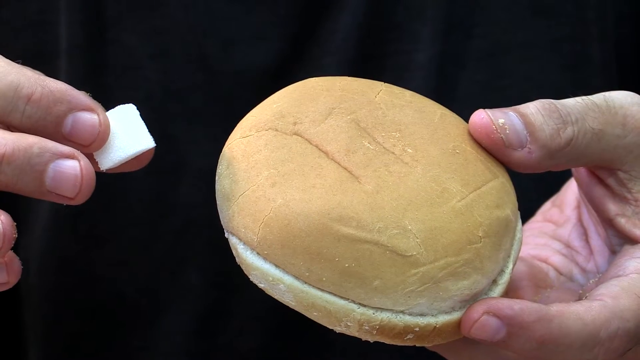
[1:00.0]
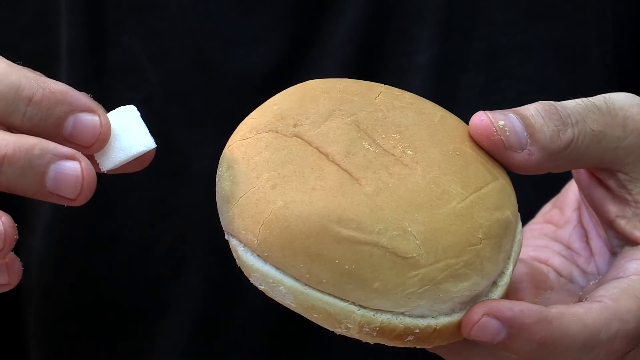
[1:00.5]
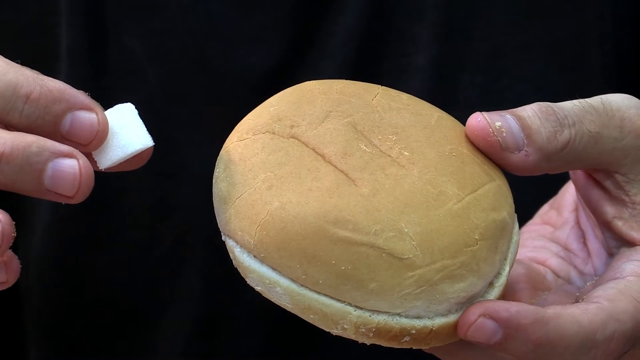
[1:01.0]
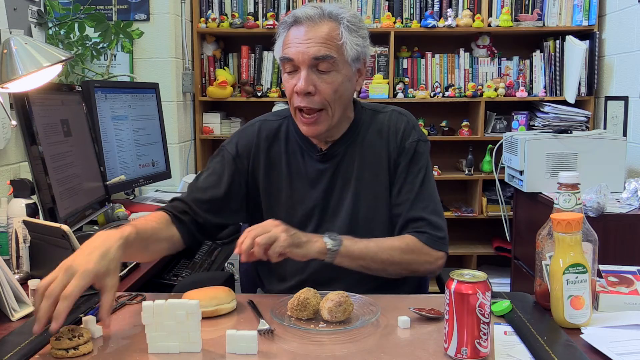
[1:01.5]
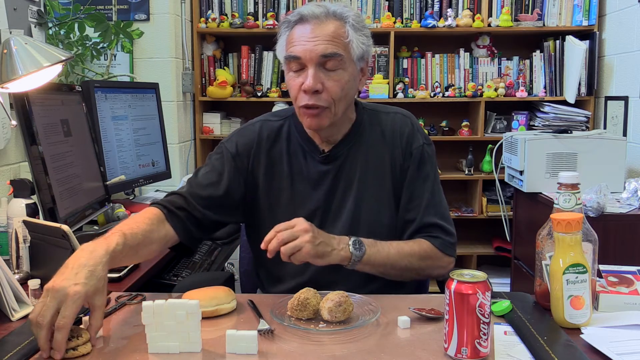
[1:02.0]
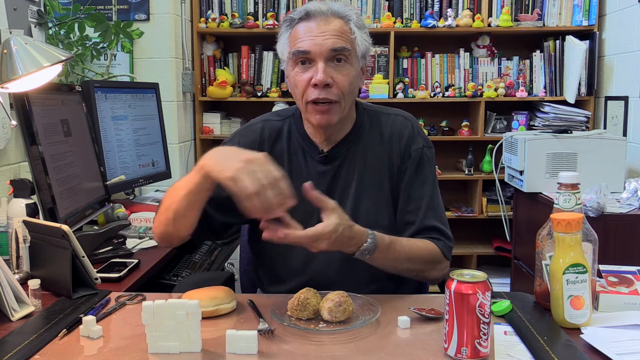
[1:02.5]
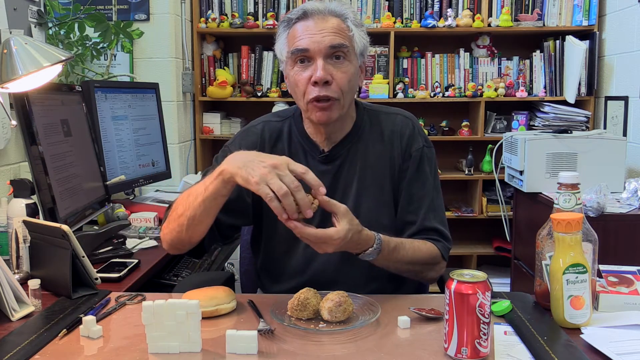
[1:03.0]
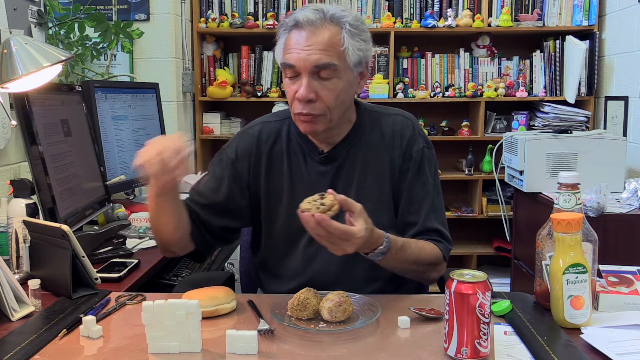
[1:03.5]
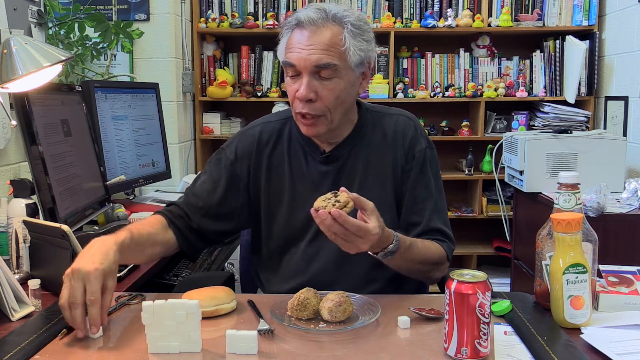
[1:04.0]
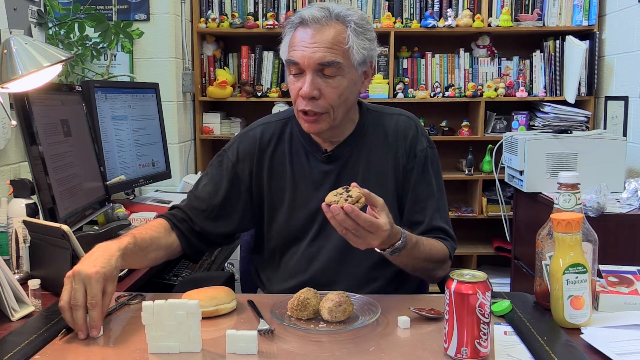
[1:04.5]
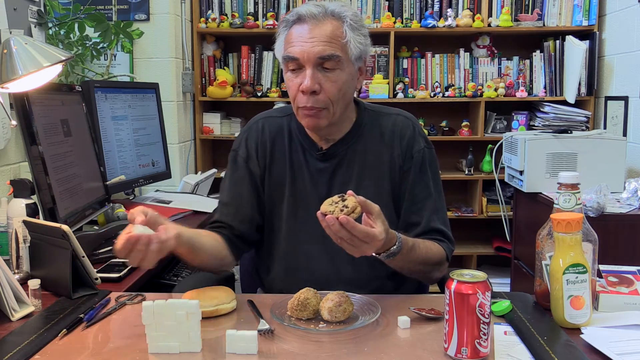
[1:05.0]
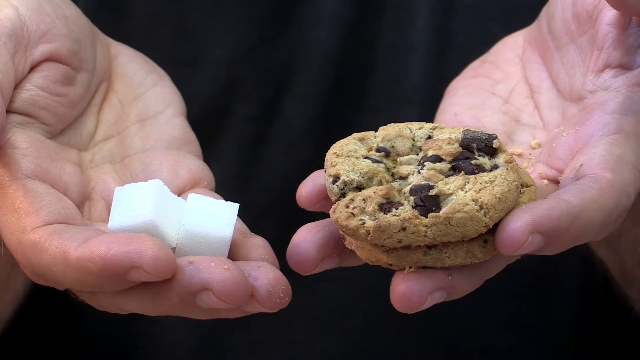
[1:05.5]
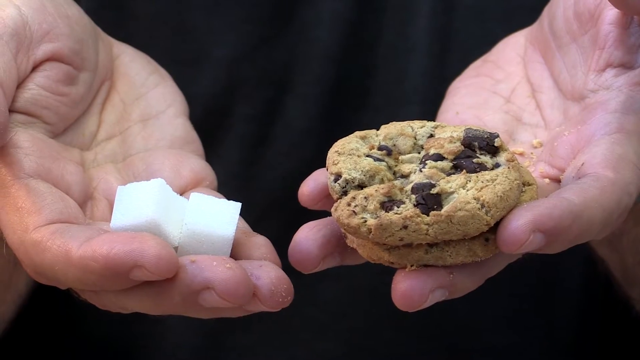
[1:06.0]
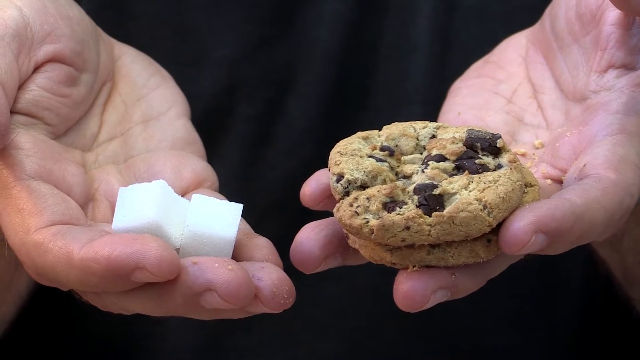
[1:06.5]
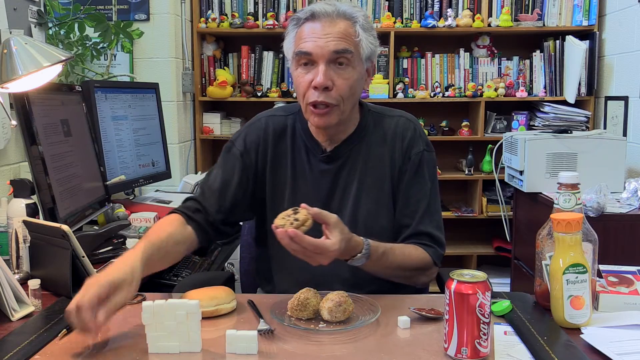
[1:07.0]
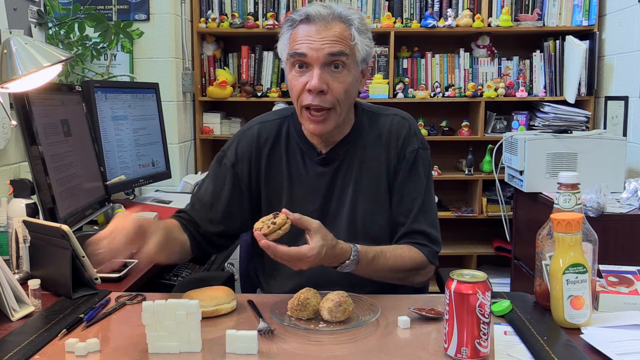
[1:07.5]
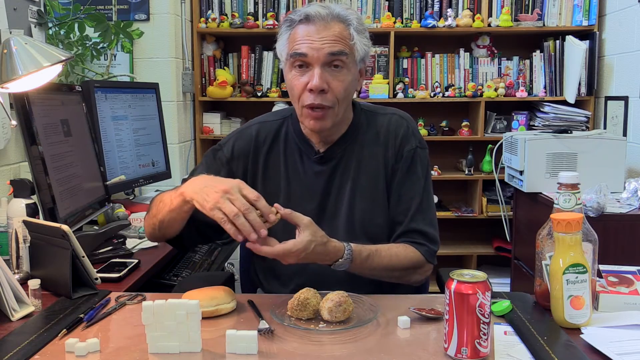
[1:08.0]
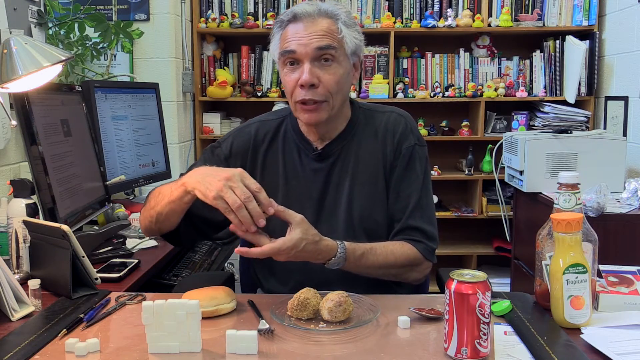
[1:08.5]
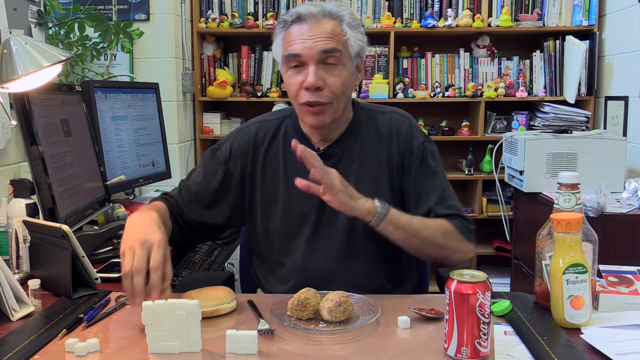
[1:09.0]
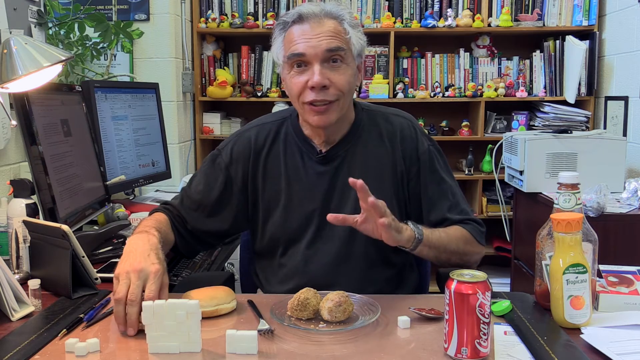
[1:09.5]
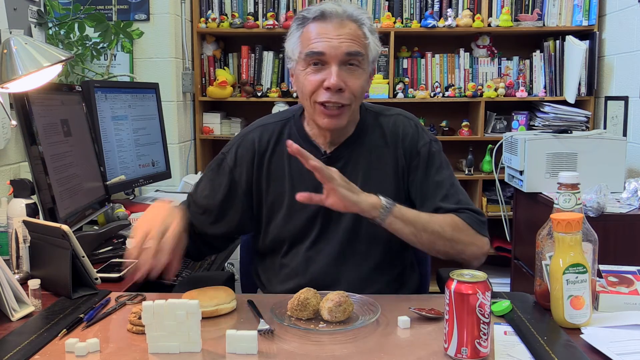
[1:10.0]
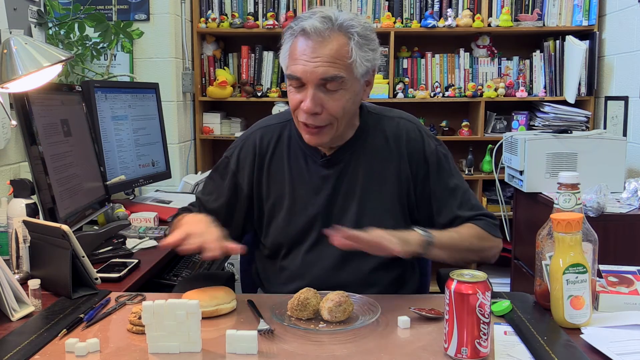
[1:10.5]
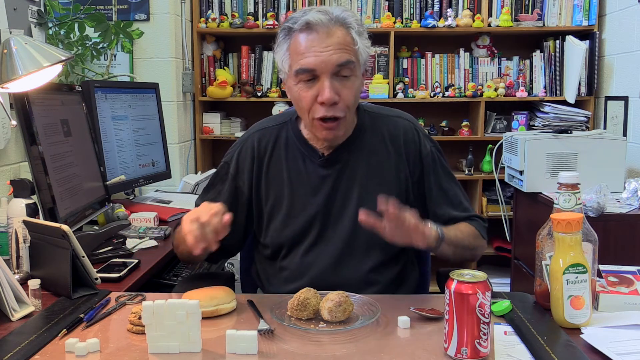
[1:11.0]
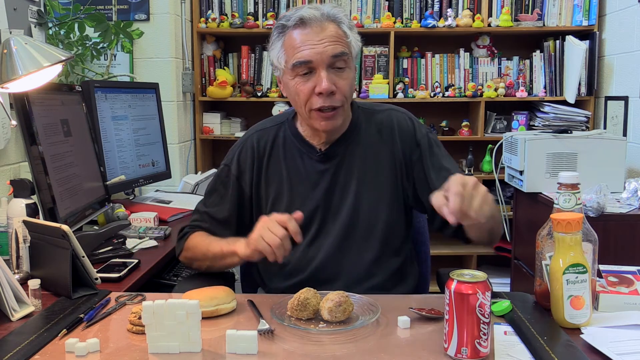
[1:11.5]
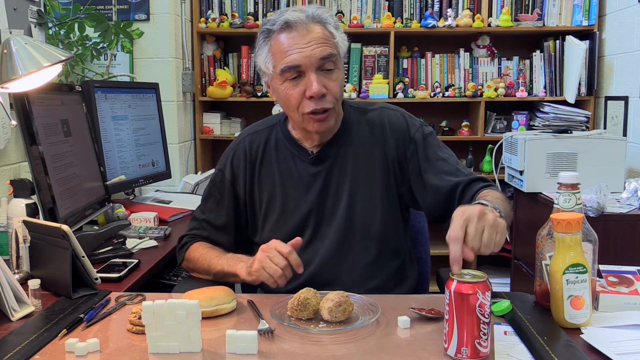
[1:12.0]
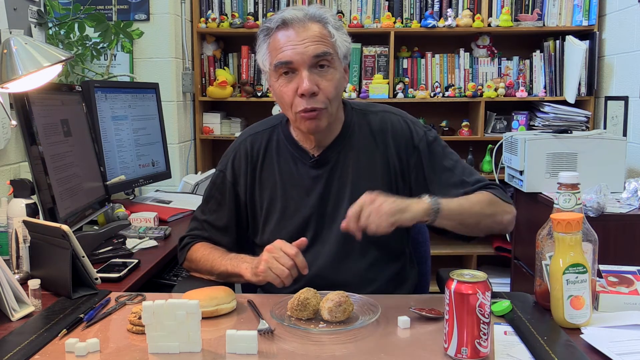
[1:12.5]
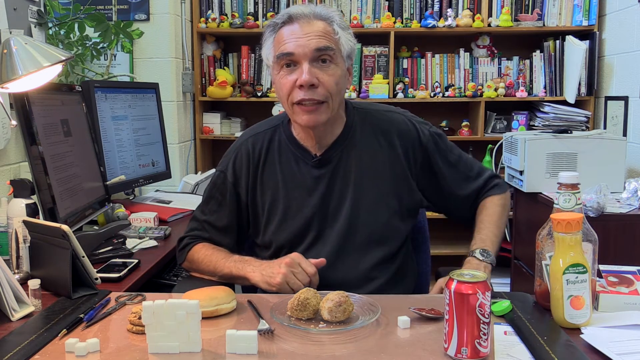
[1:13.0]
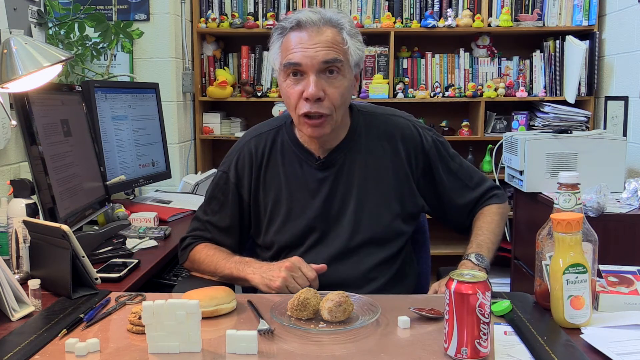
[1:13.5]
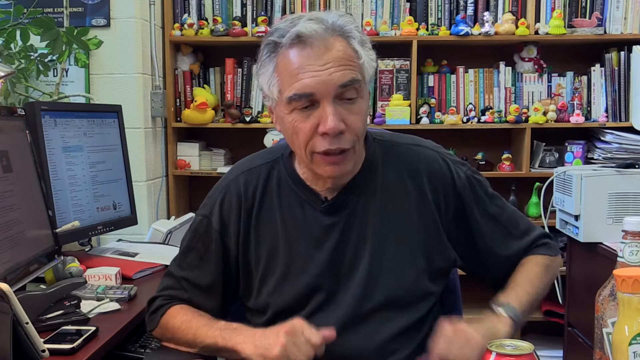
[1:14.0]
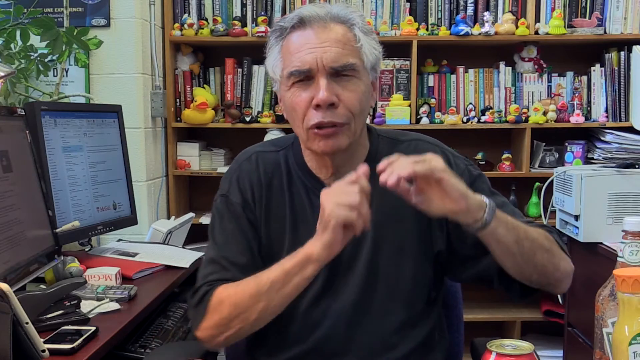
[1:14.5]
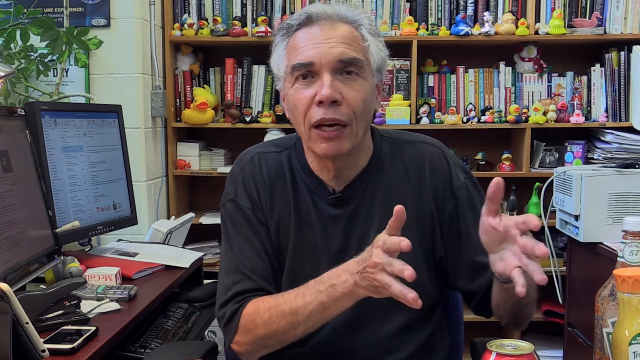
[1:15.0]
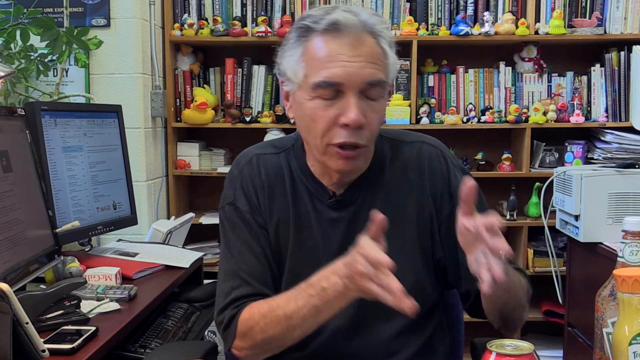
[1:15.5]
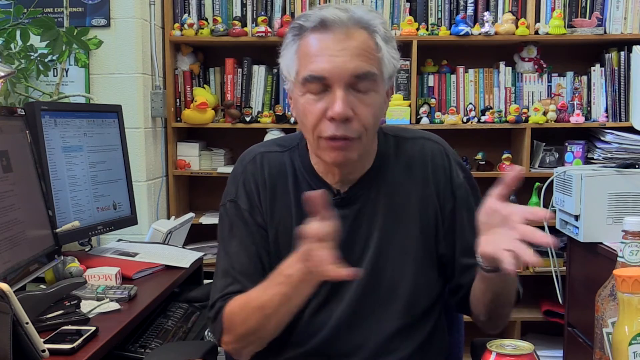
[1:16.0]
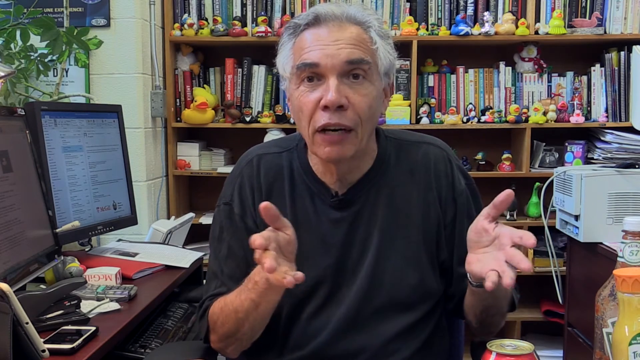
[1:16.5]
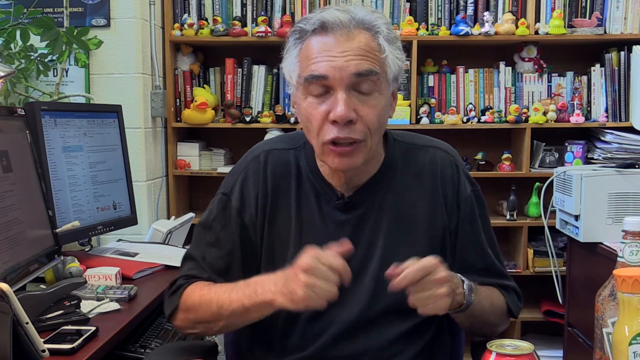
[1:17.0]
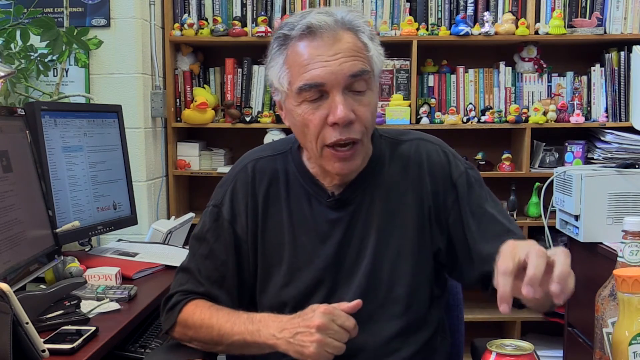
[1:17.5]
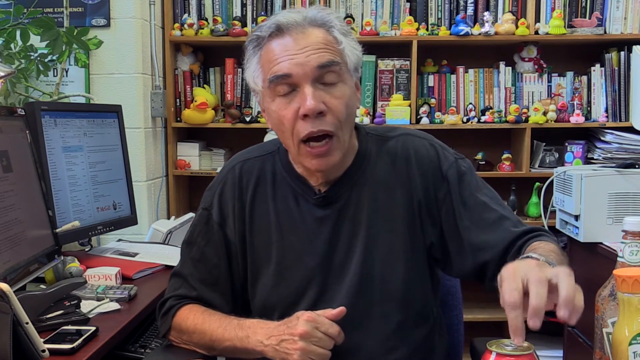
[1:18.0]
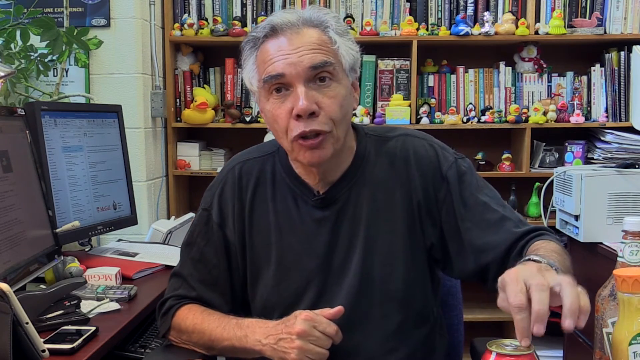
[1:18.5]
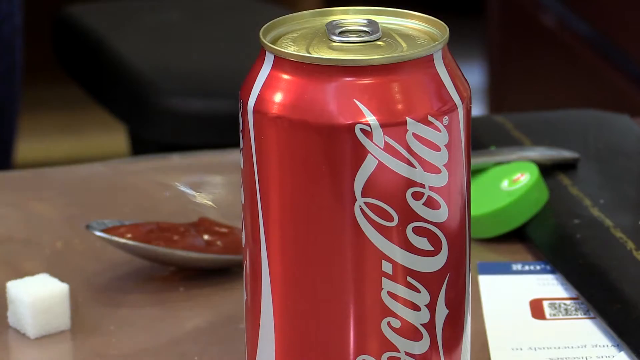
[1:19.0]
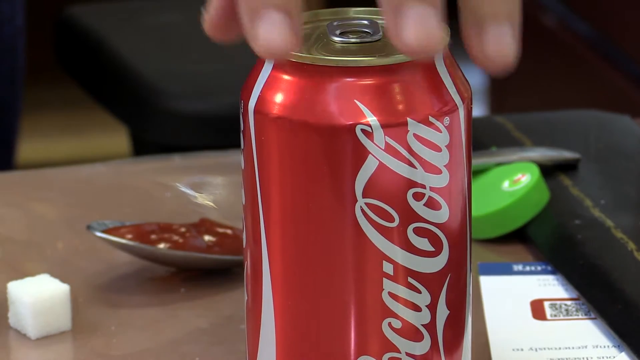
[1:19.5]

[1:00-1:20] The man holds what appears to be a hamburger bun in his right hand and a cube of something in his left hand. His fingernails are cut very short, and the inside of one of his palms is visible. He picks up two cookies and two sugar cubes, which are shown up close. The man wears a black shirt and has black and white hair, and the office is a very small, very narrow space. He points to a red Coca-Cola can with white writing, taps on top of it, and then wraps four fingers around the top of the can. The bookshelf at the back holds several rubber duckies, books and what appears to be some type of paperwork; there are two computer screens and a printer in the background. He points to several items, apparently showing how the cube in his hand relates to the other product in his hand.